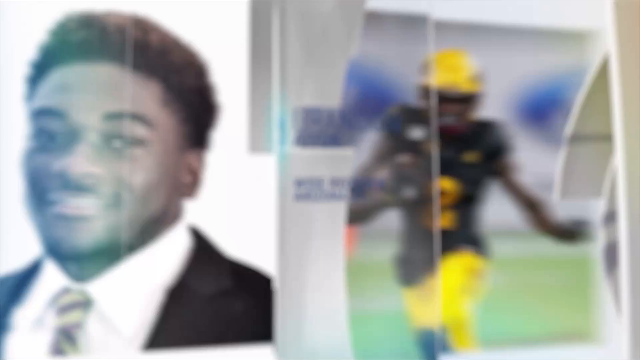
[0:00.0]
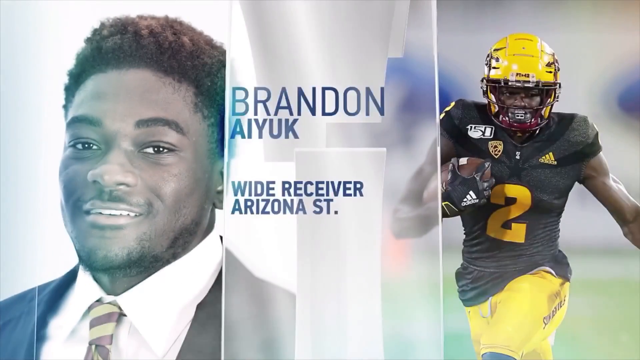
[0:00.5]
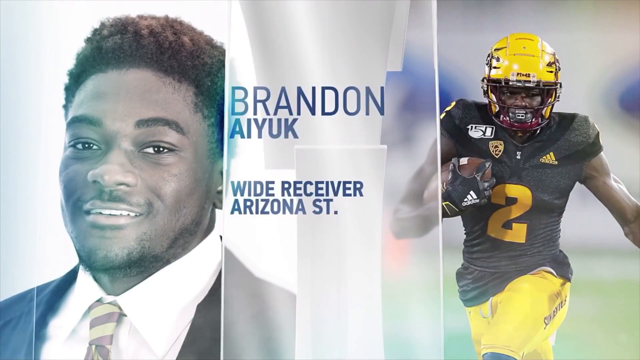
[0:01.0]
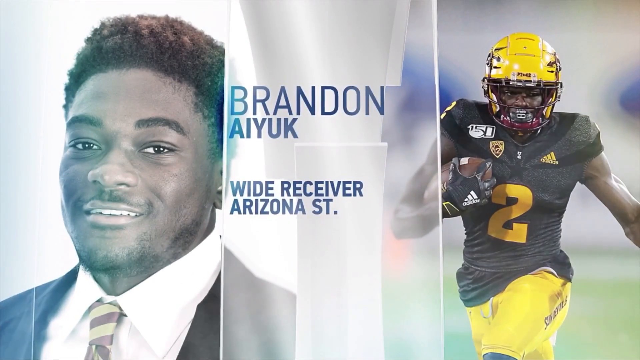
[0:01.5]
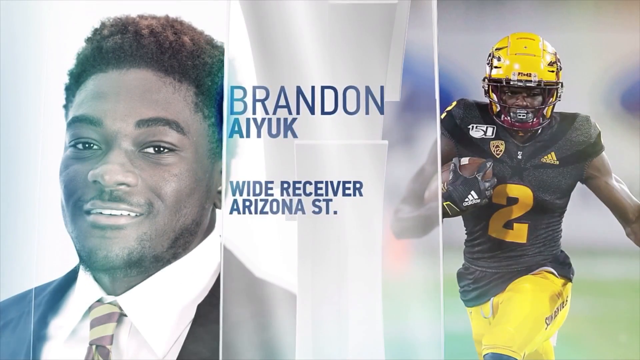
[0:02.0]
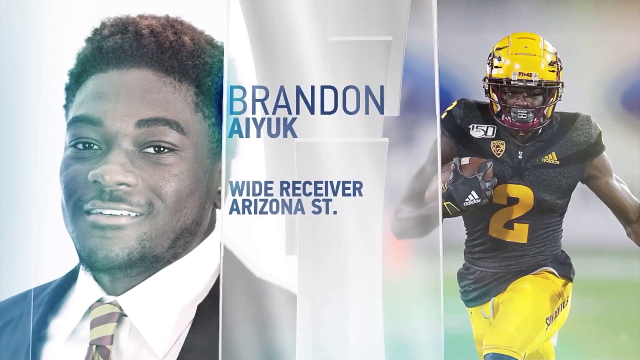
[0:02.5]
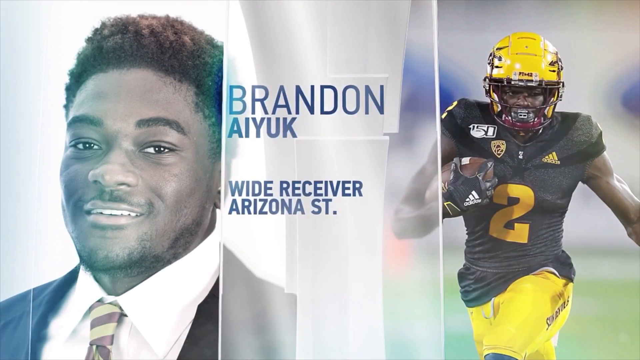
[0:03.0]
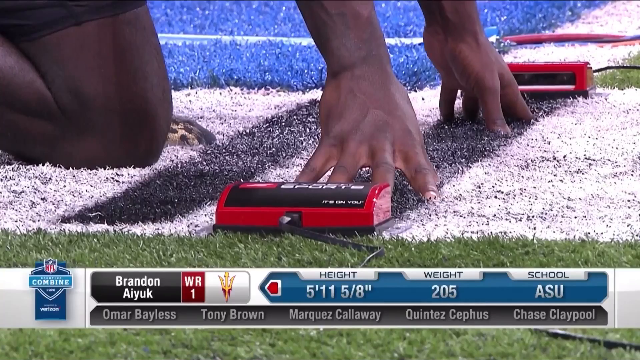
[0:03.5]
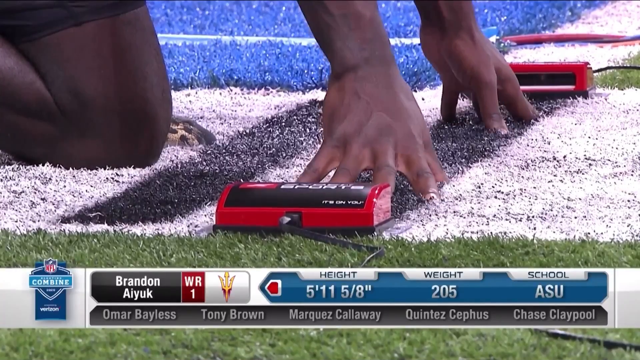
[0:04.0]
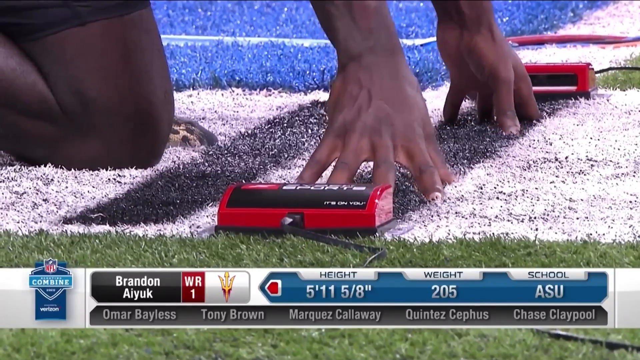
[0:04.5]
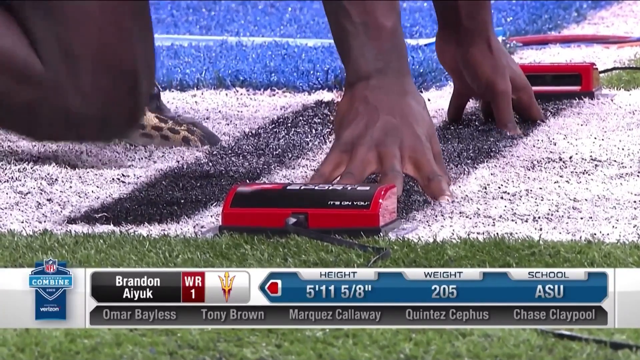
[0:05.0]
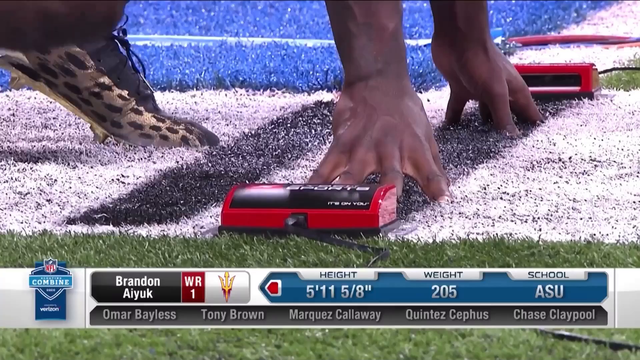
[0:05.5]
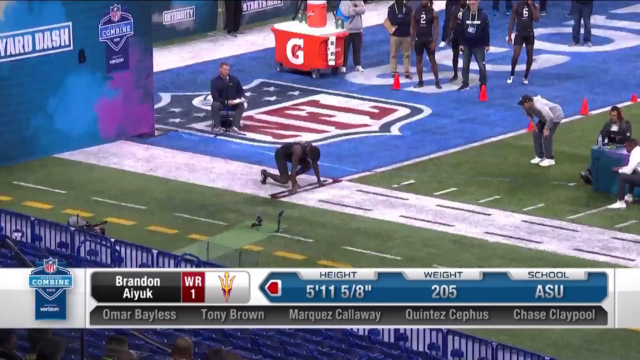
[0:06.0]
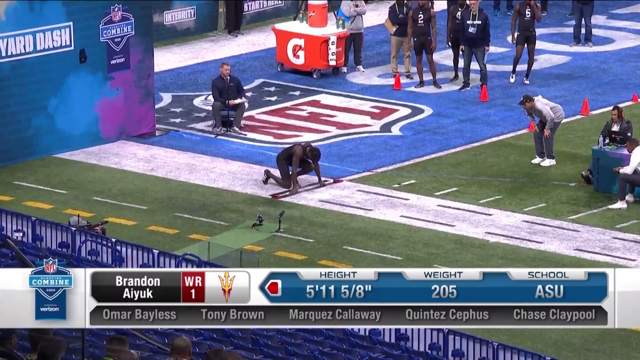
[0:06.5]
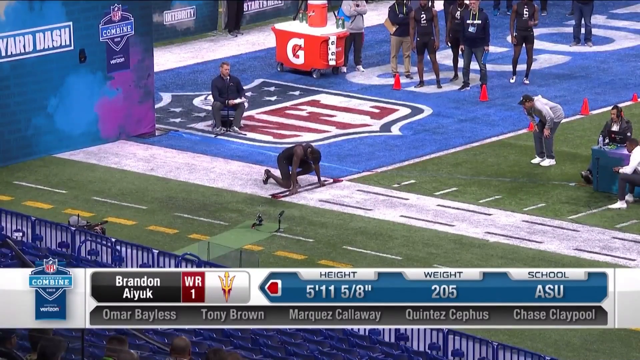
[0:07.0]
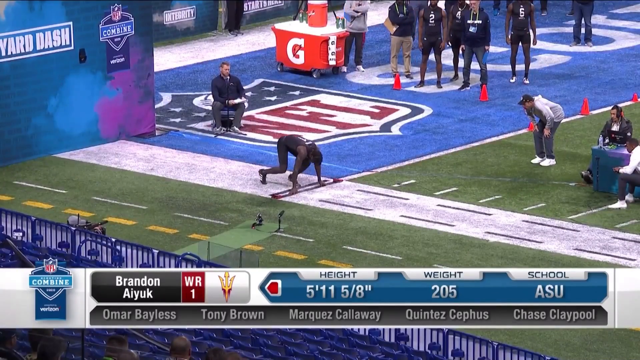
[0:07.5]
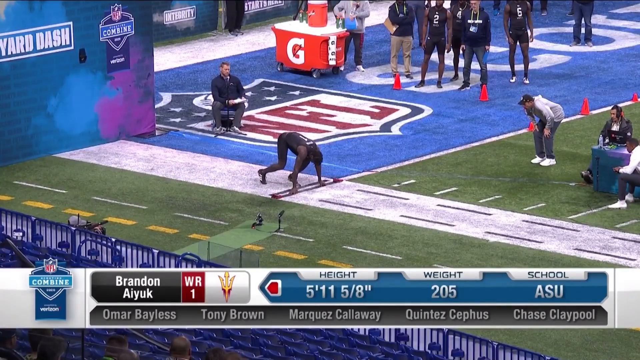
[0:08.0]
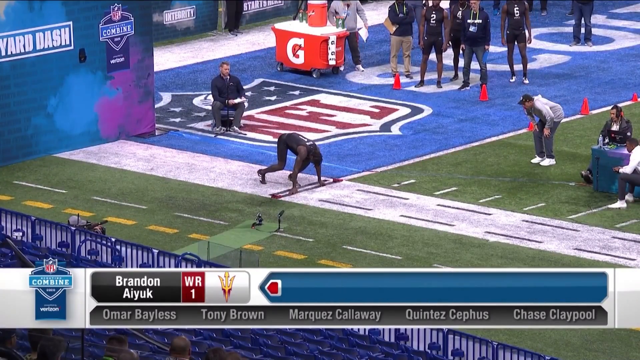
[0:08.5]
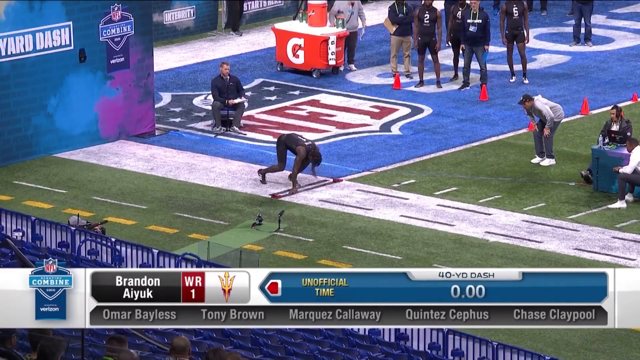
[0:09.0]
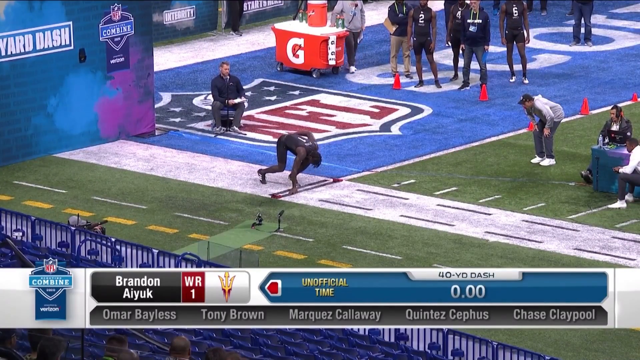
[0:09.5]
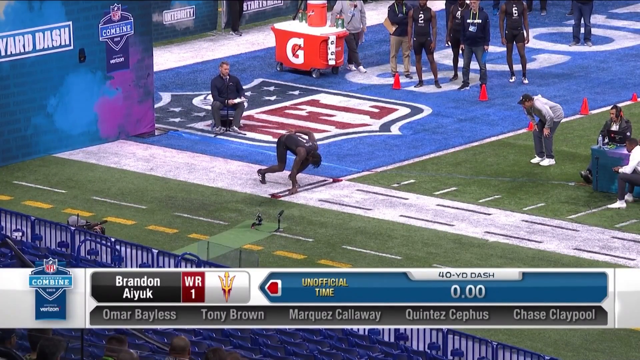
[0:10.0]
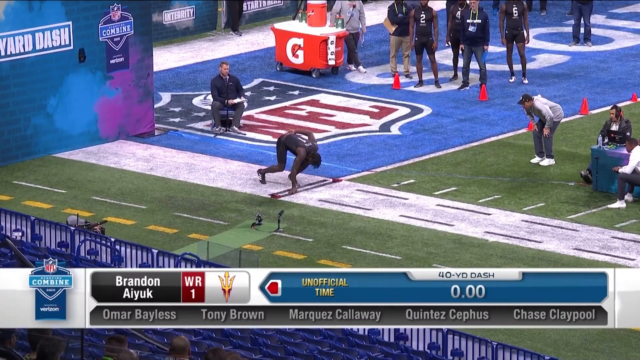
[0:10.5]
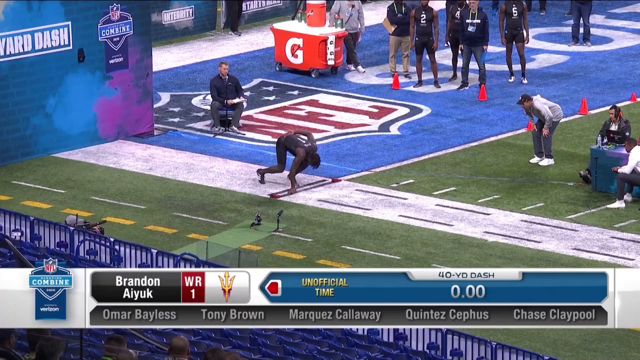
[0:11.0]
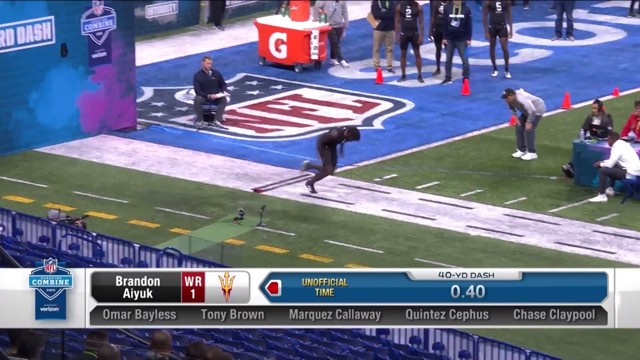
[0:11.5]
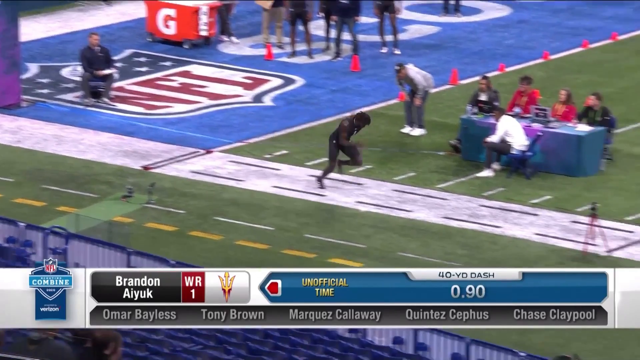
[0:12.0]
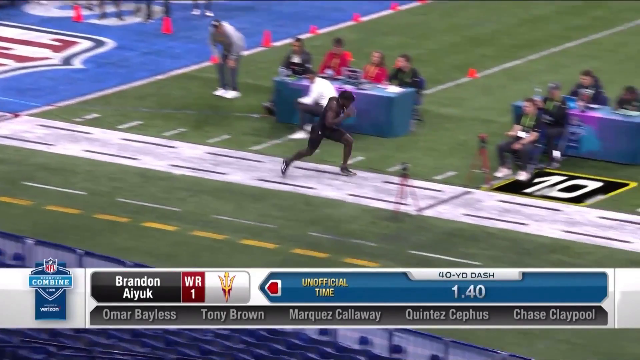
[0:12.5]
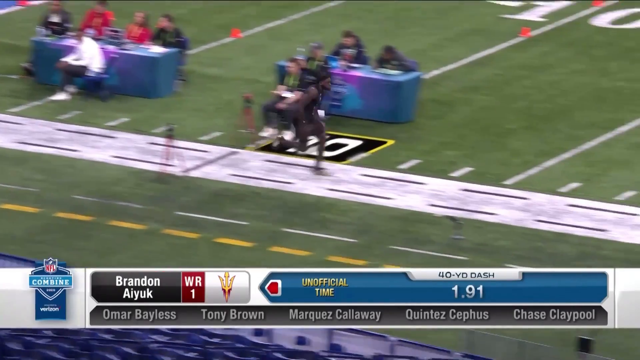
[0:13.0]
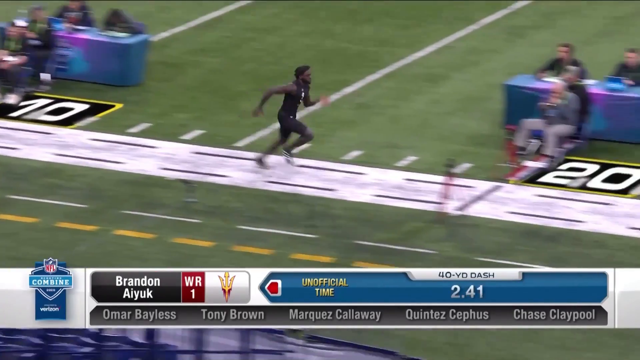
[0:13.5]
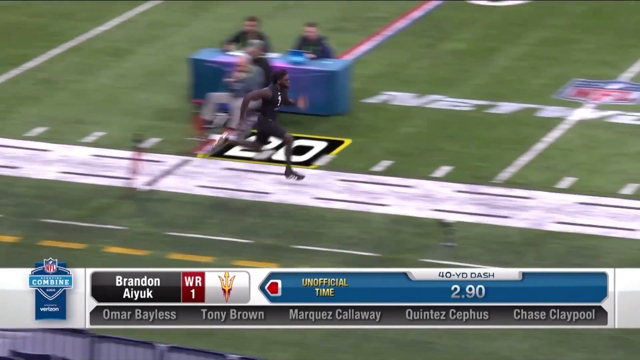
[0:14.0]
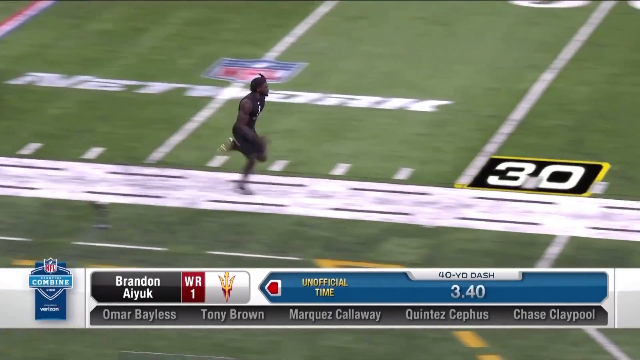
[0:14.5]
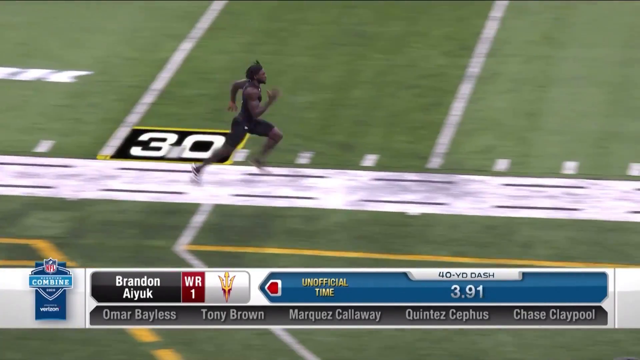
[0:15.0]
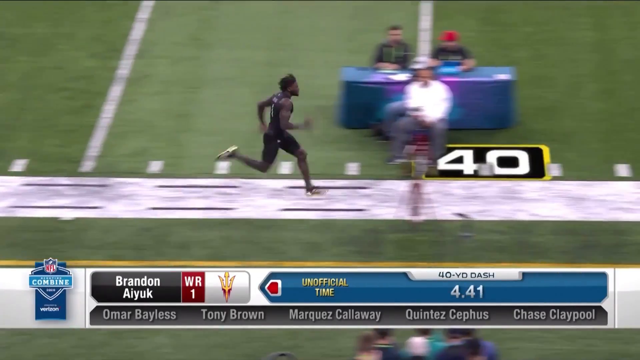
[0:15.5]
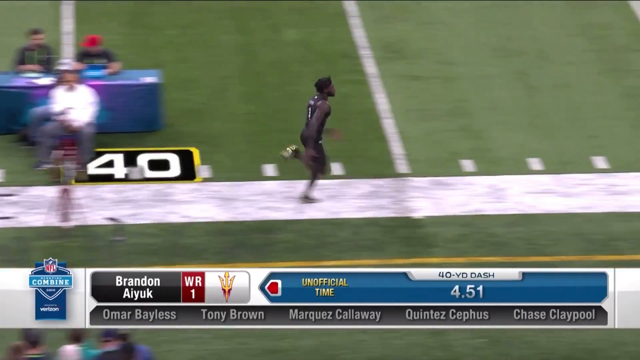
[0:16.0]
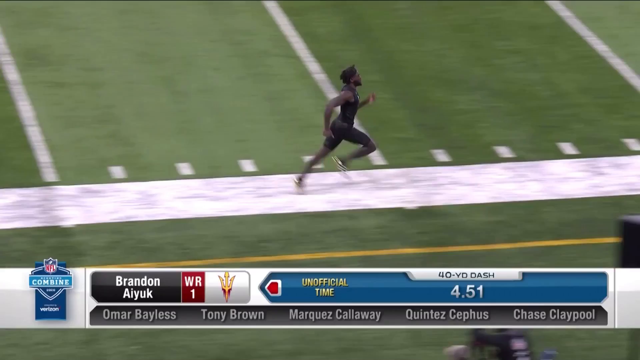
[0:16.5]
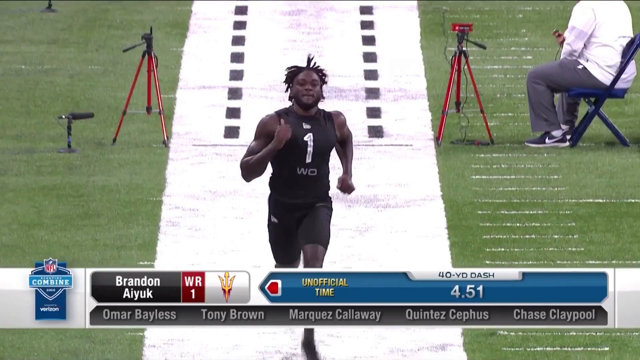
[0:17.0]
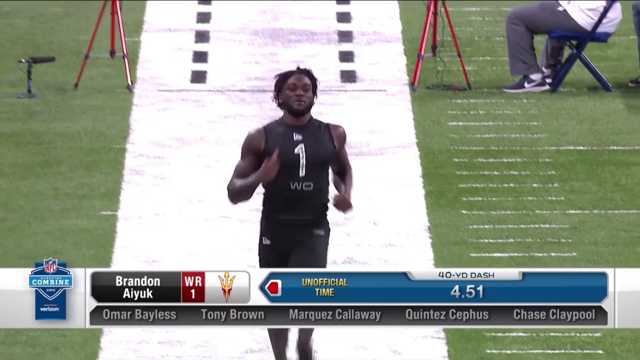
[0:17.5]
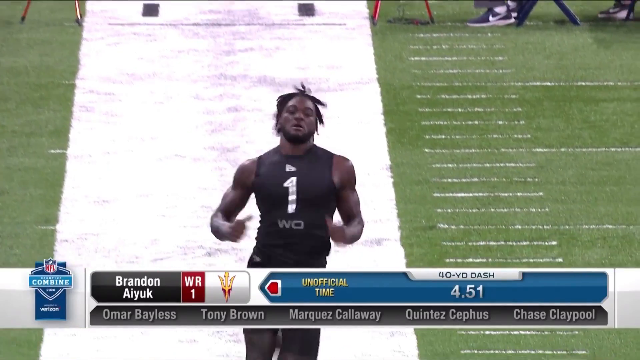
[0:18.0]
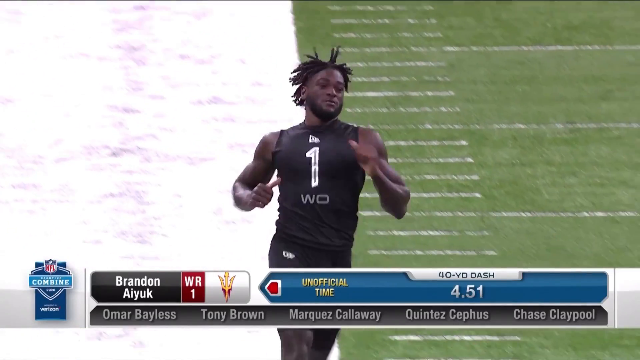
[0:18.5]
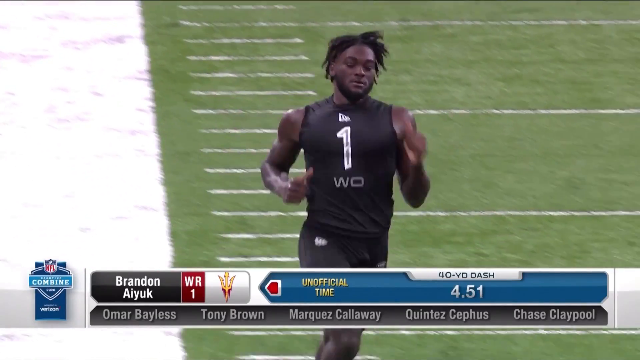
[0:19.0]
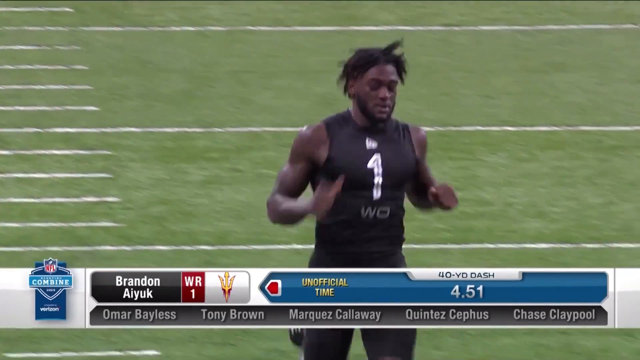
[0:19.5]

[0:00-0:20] The video features a wide receiver for Arizona State, Garstin, showing him in his football uniform and in a suit. It then shows him at the NFL combine, kneeled down on the starting line. With his hands and feet all on the ground, he lifts his body up behind him. He takes his left hand off the ground and places it behind his back, then lifts his other hand off the ground and takes off running. His arms and legs move very fast as he sprints down the white line painted onto the football field, running from left to right.